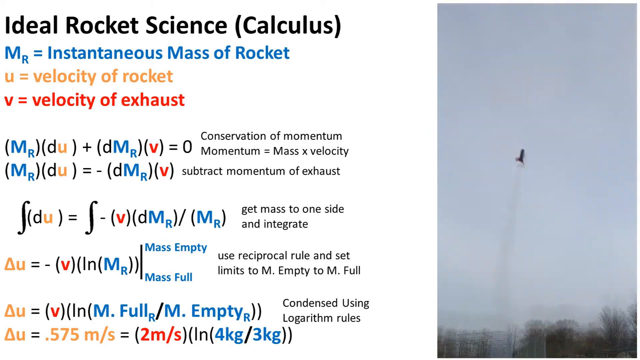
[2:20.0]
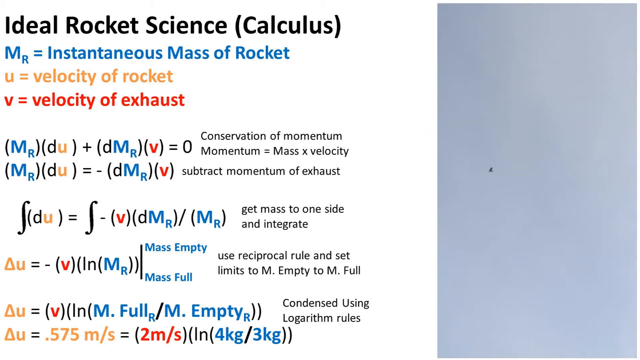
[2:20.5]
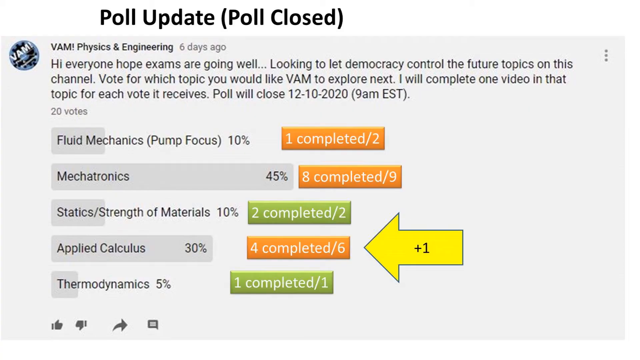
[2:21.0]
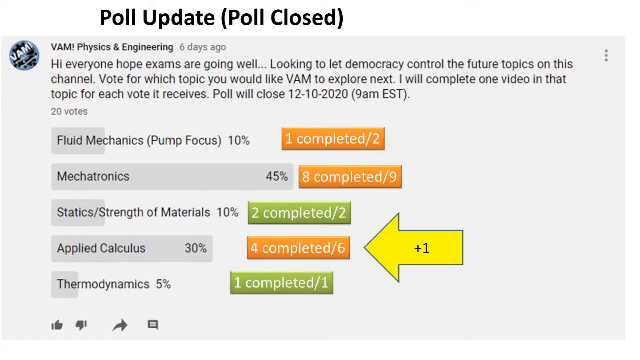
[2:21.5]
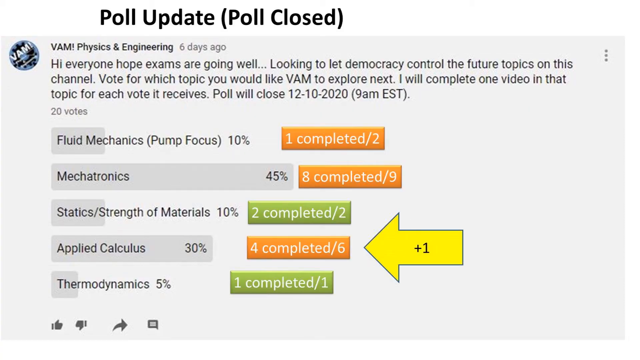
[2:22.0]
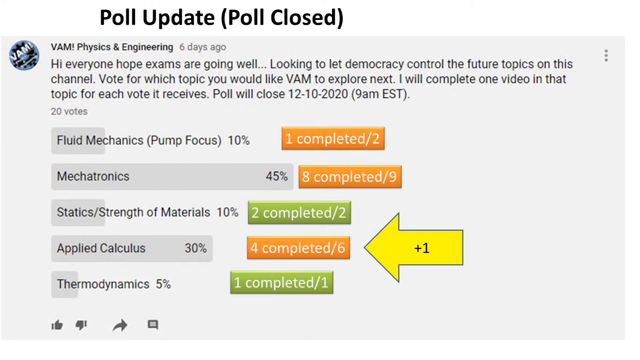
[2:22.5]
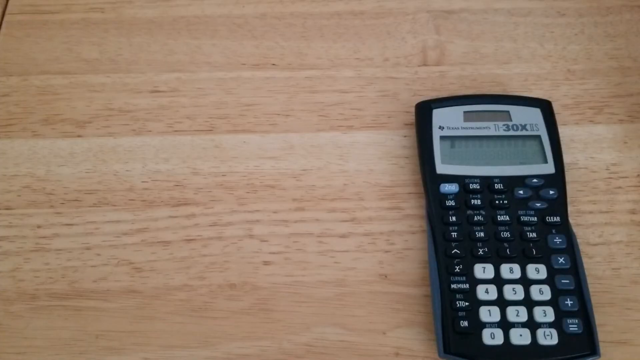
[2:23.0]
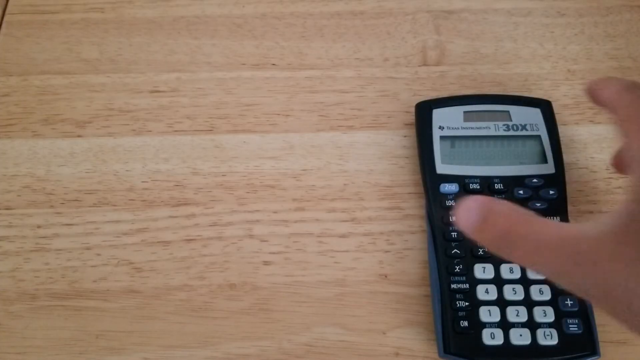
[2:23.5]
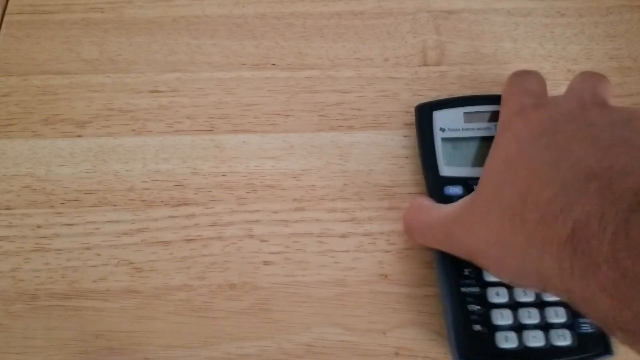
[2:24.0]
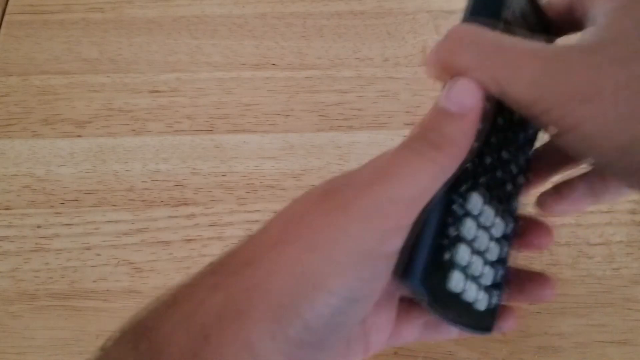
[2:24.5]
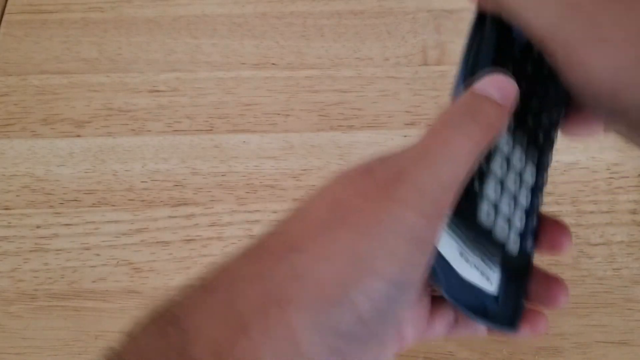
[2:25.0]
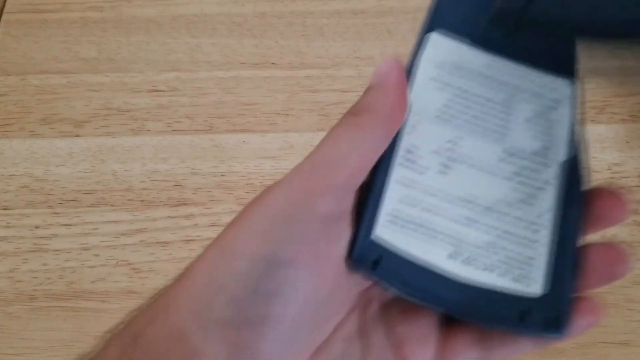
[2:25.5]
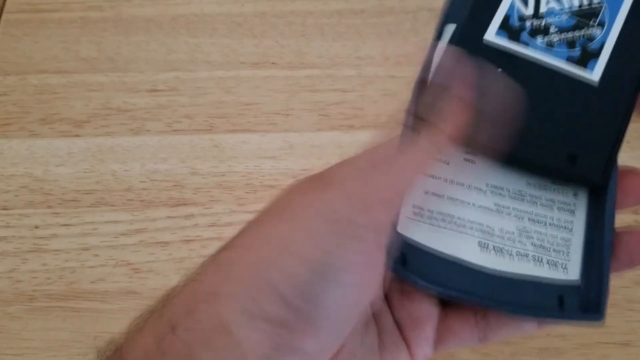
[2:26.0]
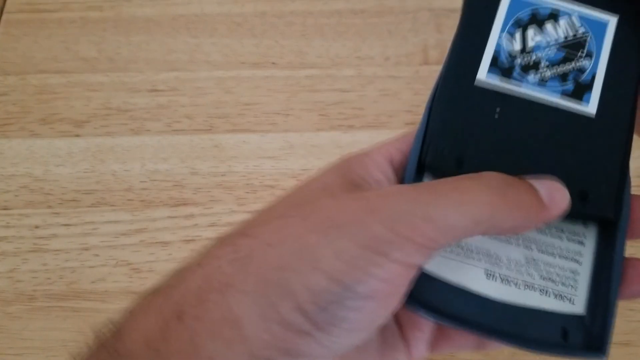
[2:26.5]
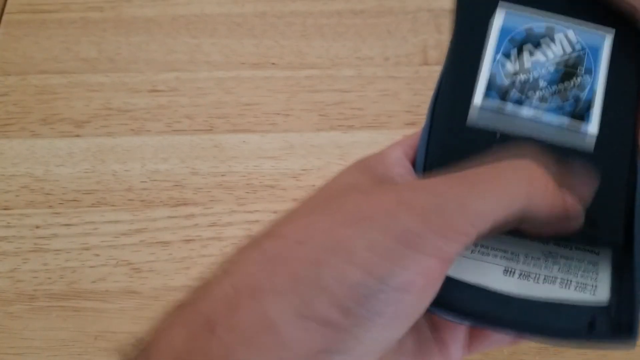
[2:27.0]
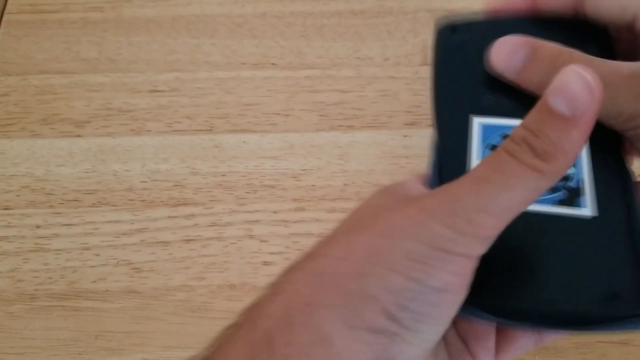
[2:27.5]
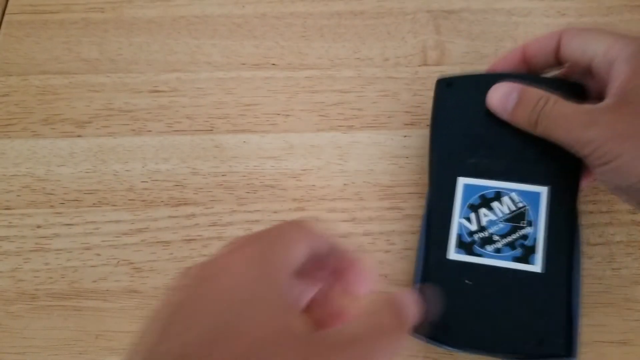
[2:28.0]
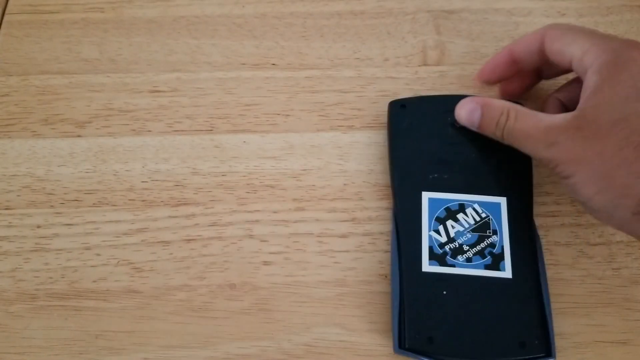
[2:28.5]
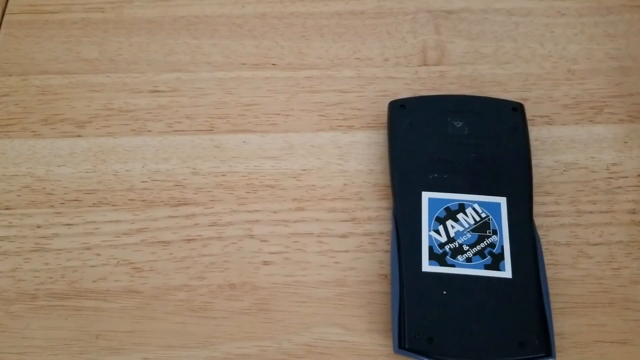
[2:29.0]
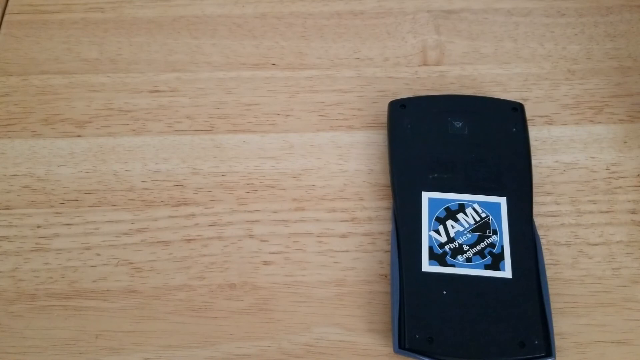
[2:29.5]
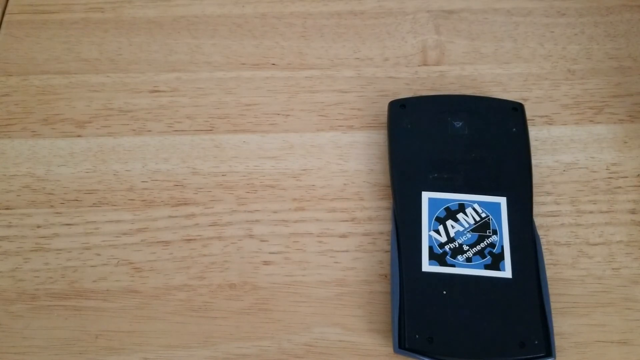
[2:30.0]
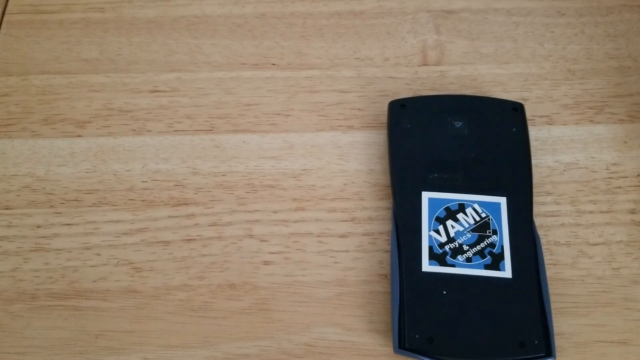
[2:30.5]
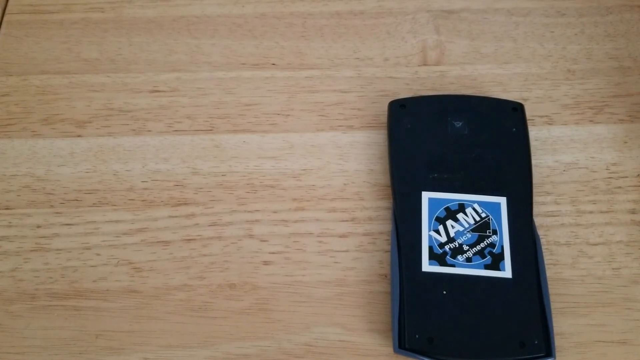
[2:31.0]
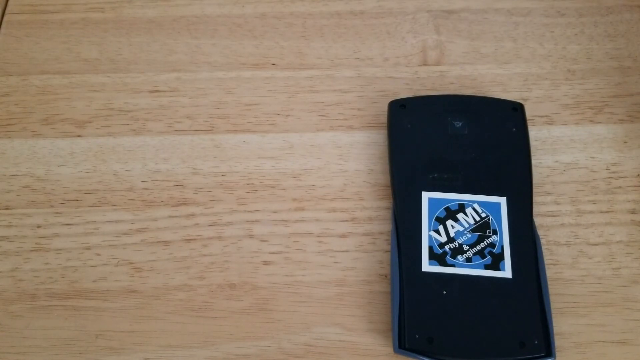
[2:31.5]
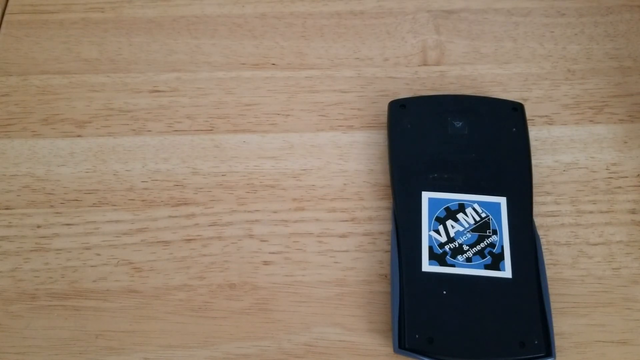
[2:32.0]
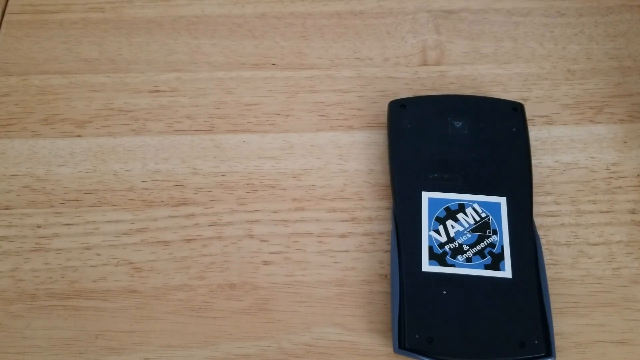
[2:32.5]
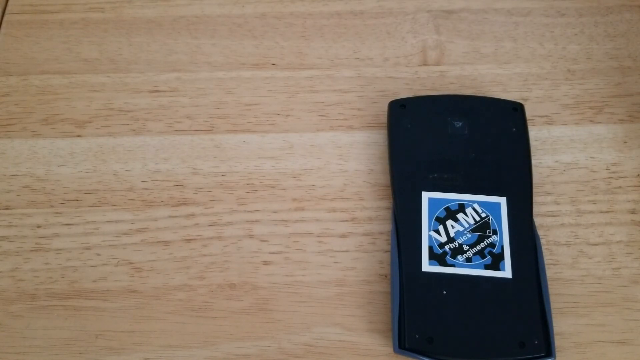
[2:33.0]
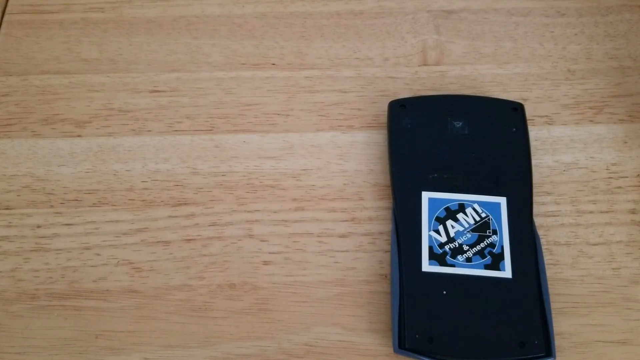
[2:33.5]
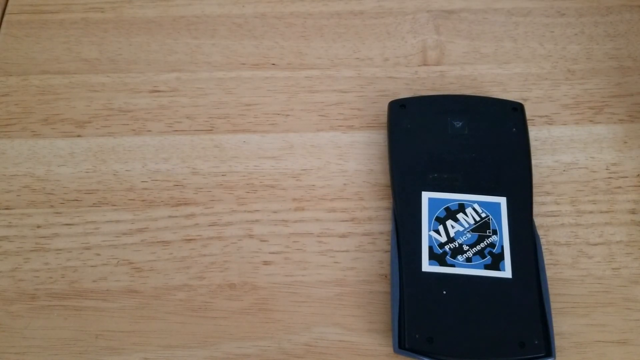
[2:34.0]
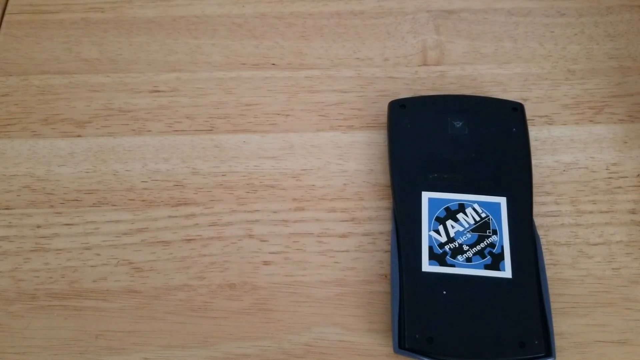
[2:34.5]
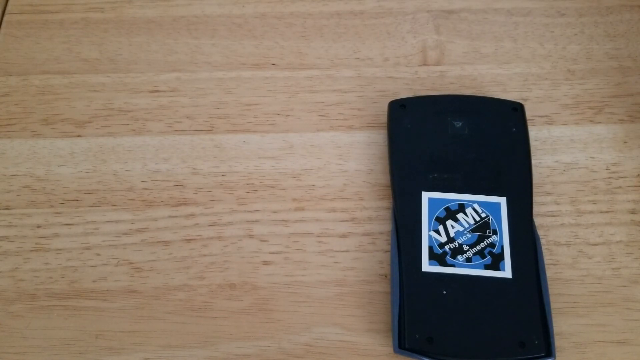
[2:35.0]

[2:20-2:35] The final screen shows the completed, filled-out equation with the order of operations on the left and the looping video of a rocket flying in the air on the right. The video then cuts to a social media post by VAM Physics and Engineering, labeled "6 days ago". The post reads "Hi everyone, hope exams are going well. Looking to let democracy control the future topics on this channel. Vote for which topic you would like VAM to explore next. I will complete one video in that topic for each vote it receives. Poll will close 12-10-2020, 9 a.m. Eastern." The five poll options are "Fluid Mechanics", "Mechatronics", "Statics / Strength of Materials", "Applied Calculus" and "Thermodynamics". Finally, a person picks up a Texas Instruments TI calculator from a wooden table, flips it closed into its case and sets it down on the ground. A VAM Physics and Engineering sticker is on the back of the calculator, apparently as an outro for the creator's video.